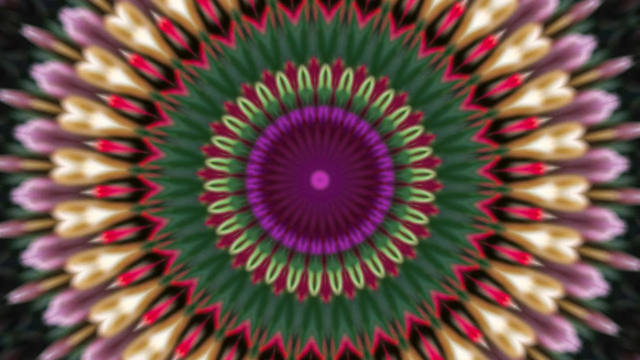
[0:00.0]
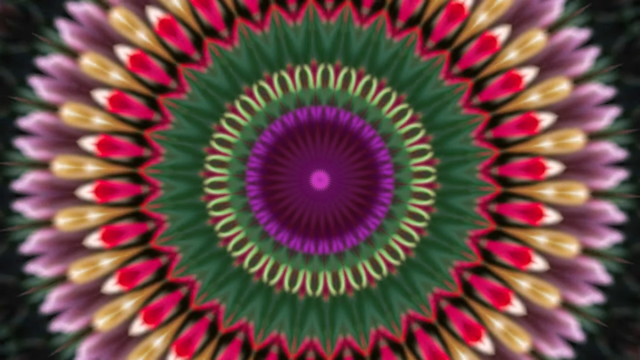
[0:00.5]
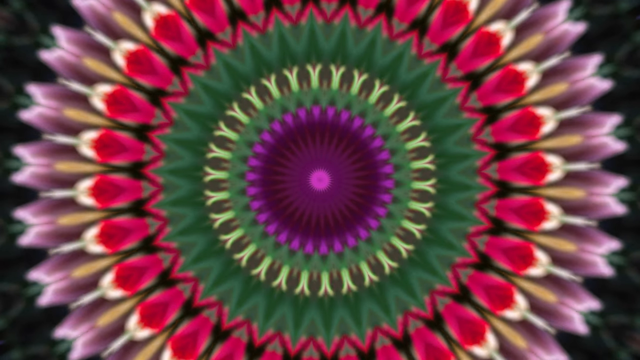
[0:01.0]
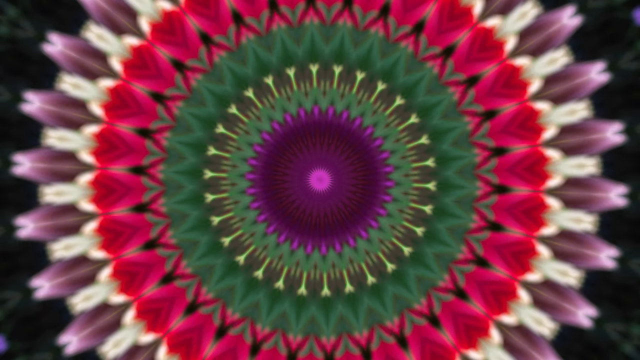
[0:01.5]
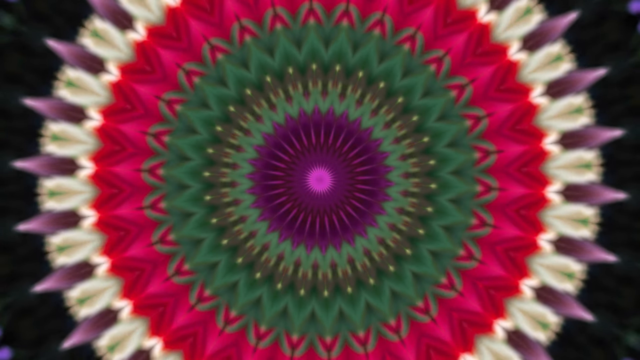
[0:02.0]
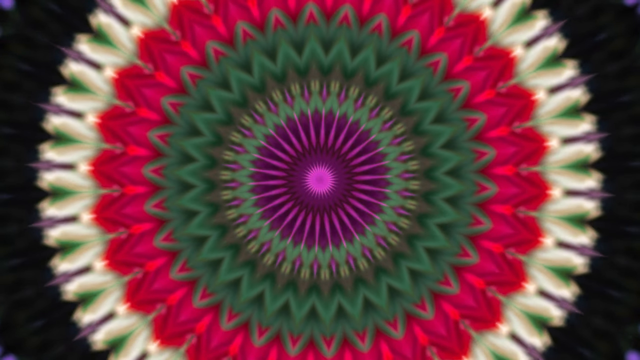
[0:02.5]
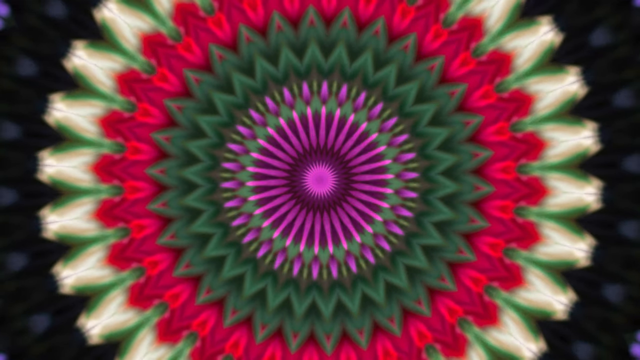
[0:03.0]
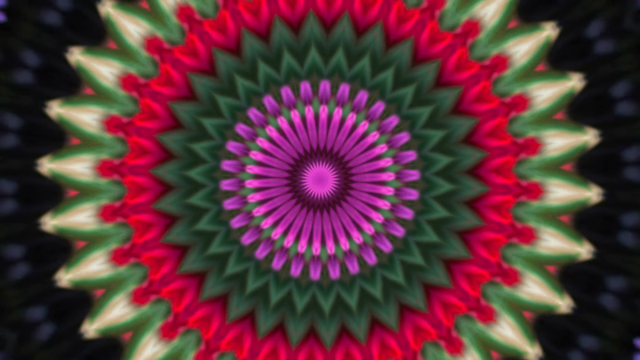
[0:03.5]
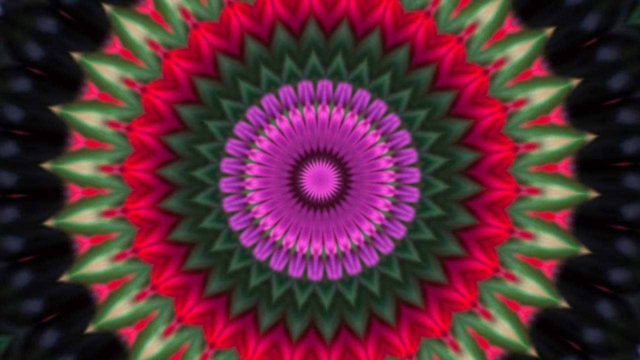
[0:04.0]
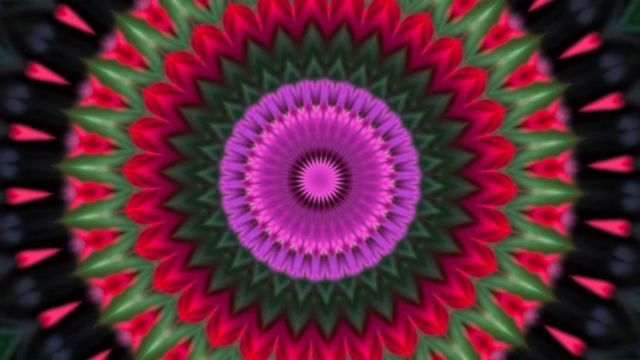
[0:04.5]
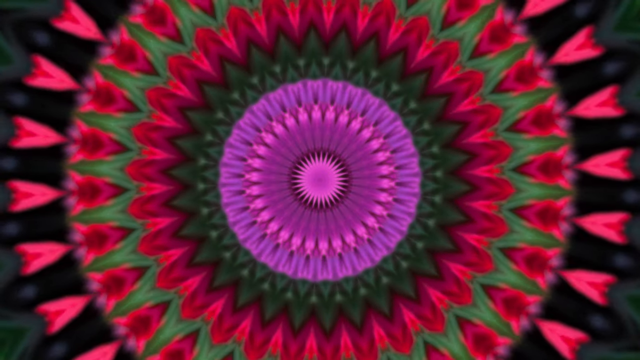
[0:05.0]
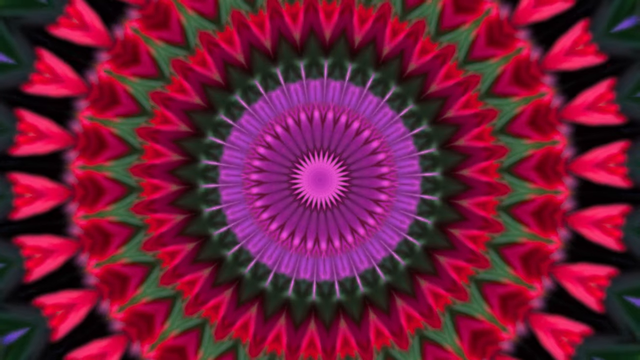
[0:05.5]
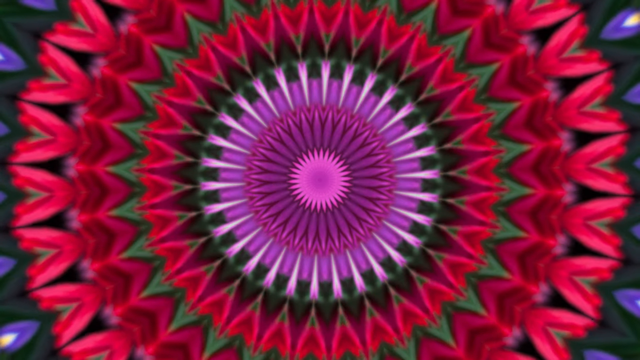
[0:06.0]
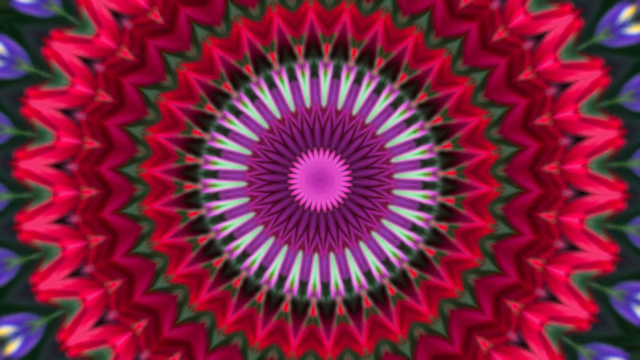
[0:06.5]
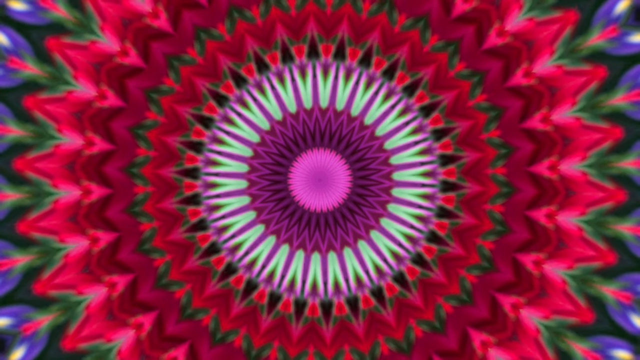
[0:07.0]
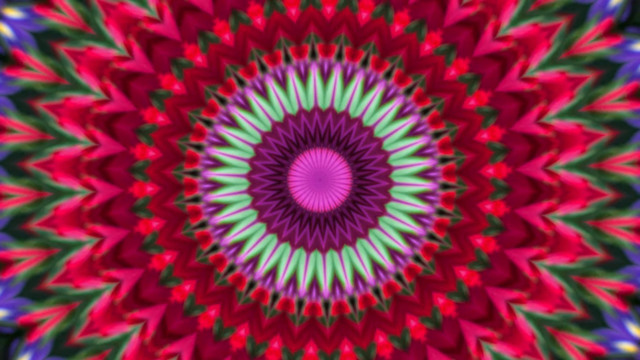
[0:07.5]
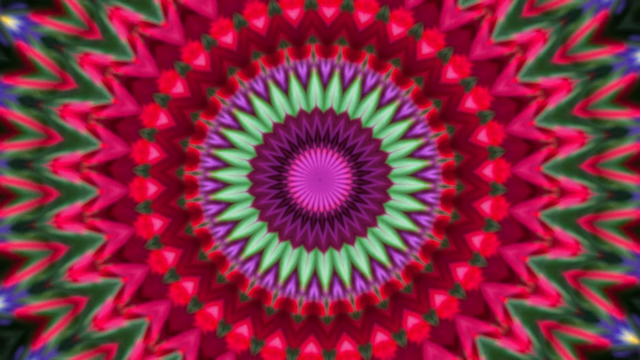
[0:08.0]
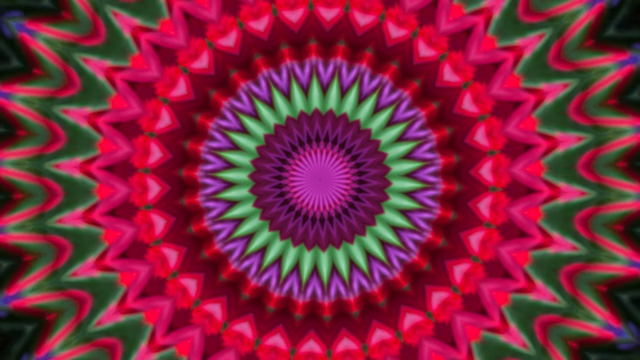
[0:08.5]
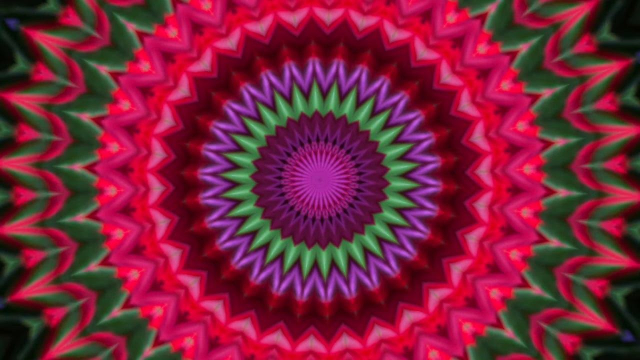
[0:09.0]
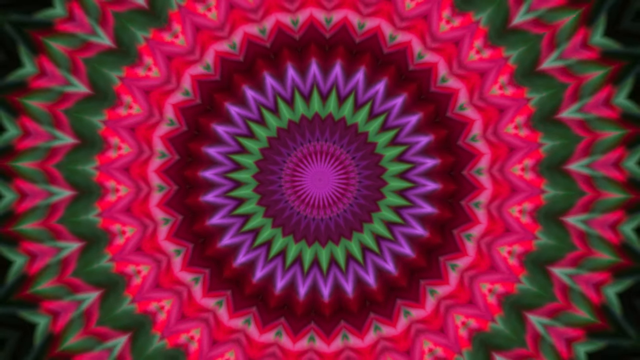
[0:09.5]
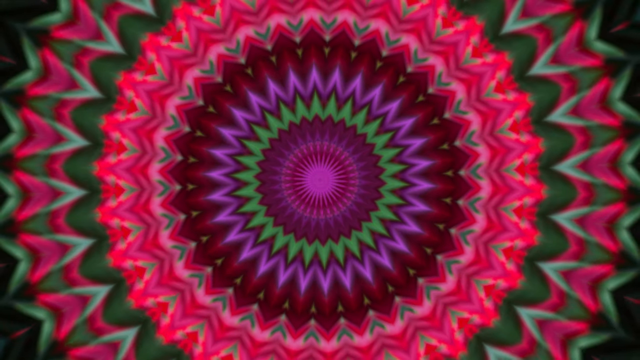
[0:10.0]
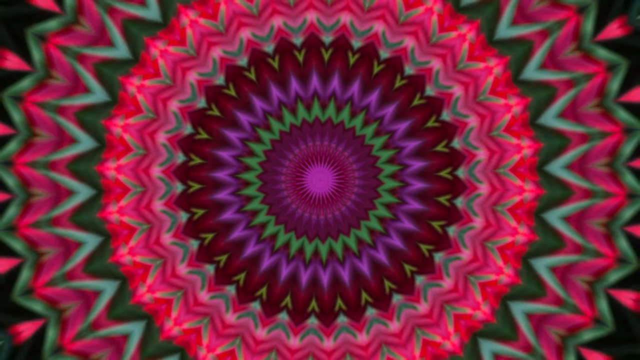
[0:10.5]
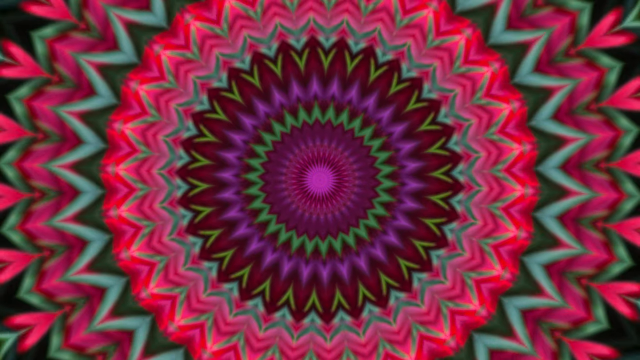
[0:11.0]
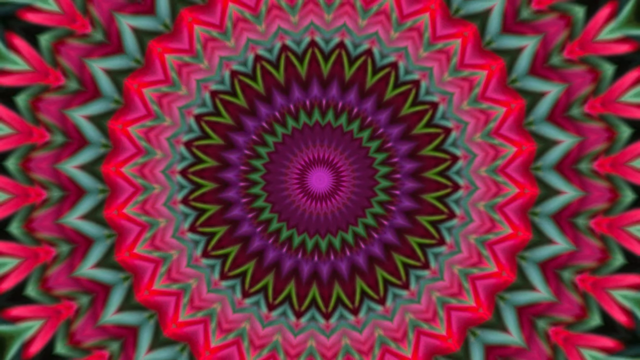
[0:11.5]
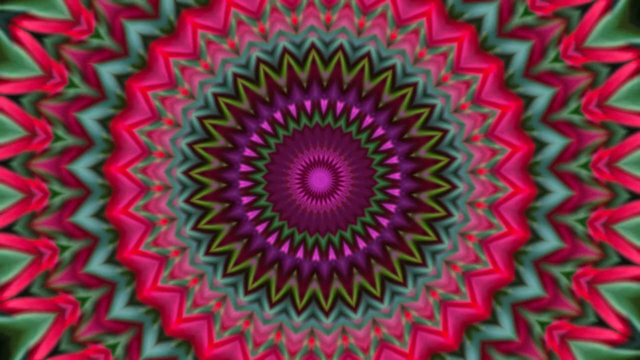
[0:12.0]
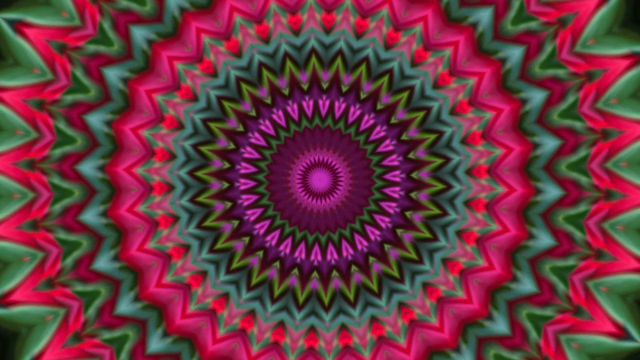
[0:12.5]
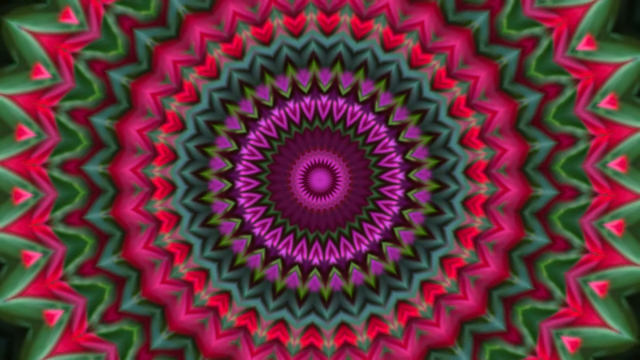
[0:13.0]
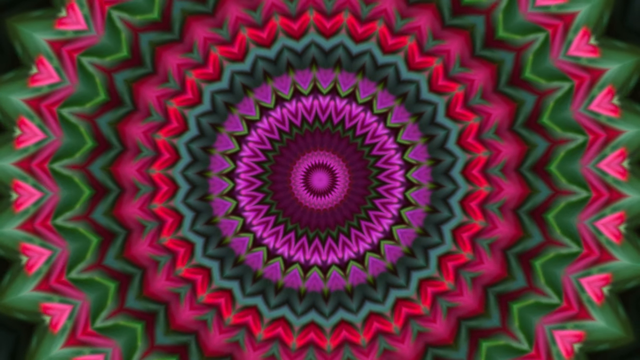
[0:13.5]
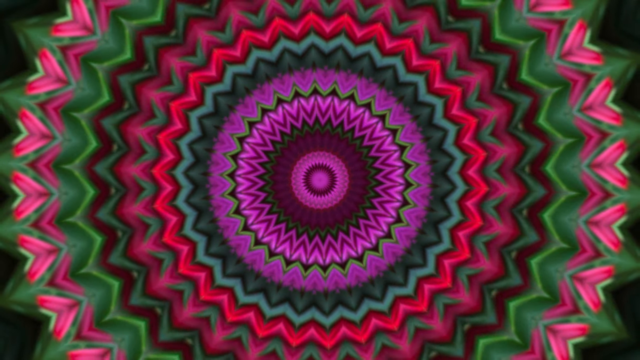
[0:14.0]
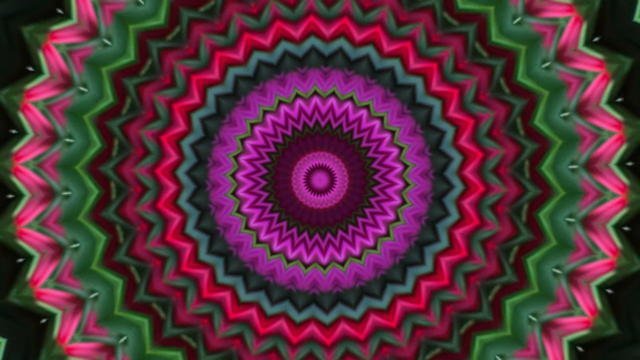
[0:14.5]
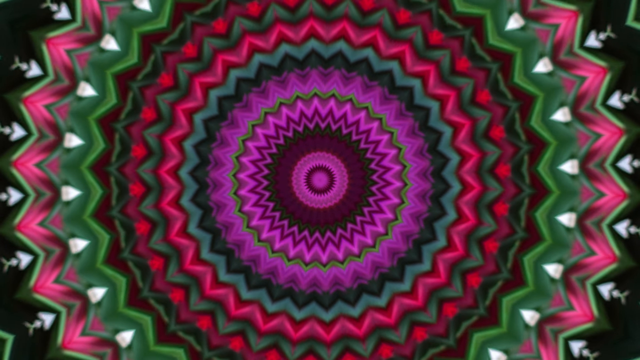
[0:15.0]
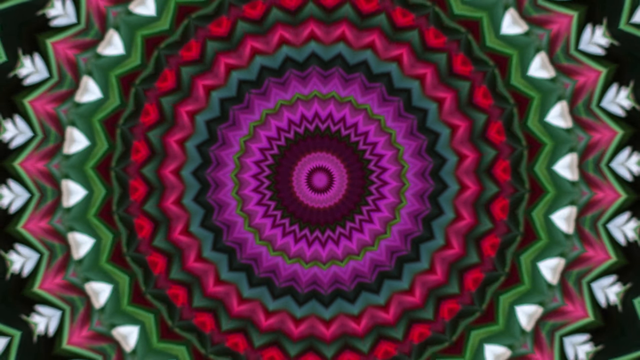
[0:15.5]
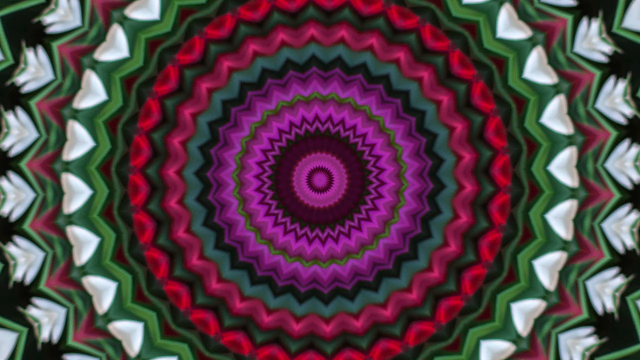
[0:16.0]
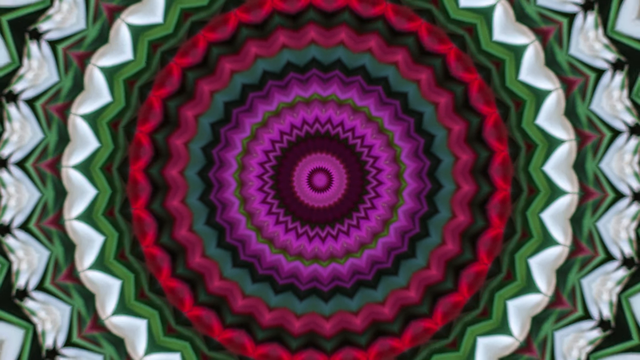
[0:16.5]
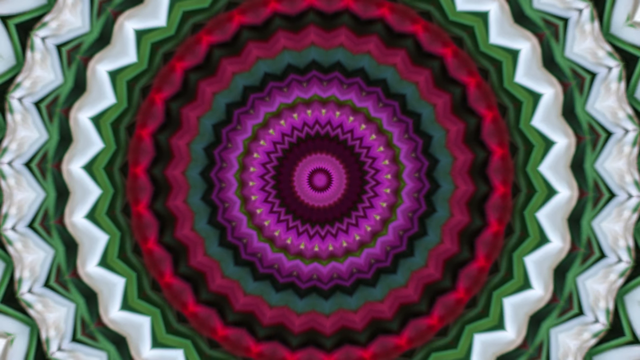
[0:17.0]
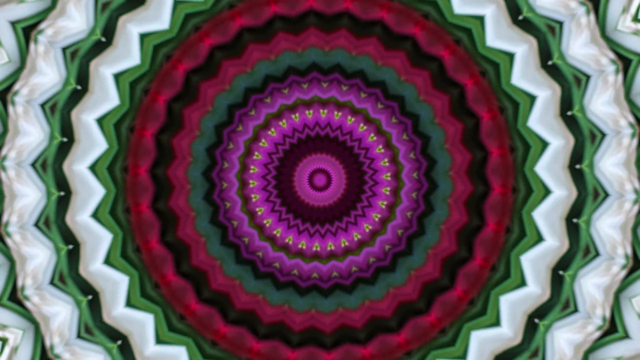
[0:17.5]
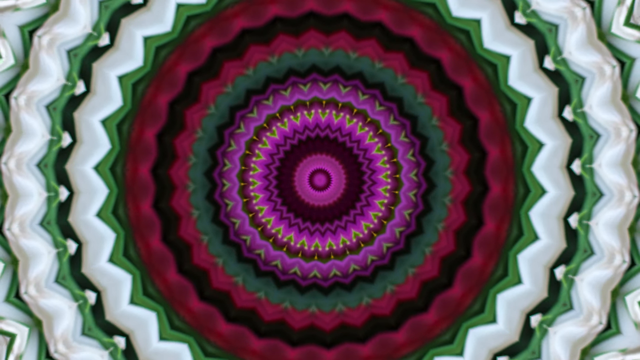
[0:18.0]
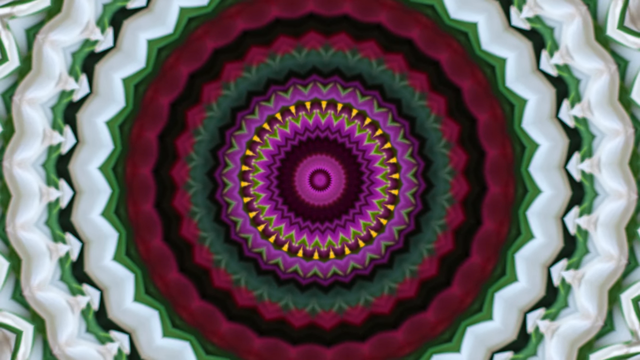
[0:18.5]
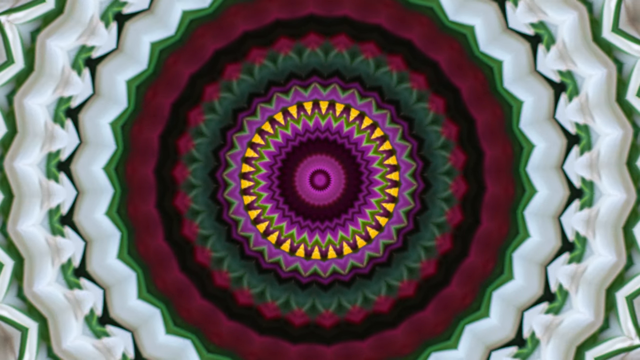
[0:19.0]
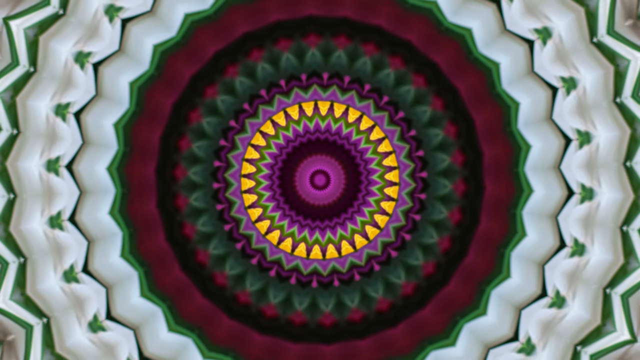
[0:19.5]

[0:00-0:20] What looks to be a kaleidoscope-like edit appears, looking a bit trippy, with different moving parts. The center circle is purple and is surrounded by decorative rings in green, red, white, and purple. The parts keep changing colors and intertwining with other parts of the circle. The center mostly stays the same while the outside keeps having different parts added onto it; some of these parts are more rounded, but more often they seem more triangular in shape. The outer edges of the image turn white and green and have cone-like tips, and at one point it almost looks like arrows are coming out of the outside of the image. Overall it is very colorful, but the color tones are more muted.